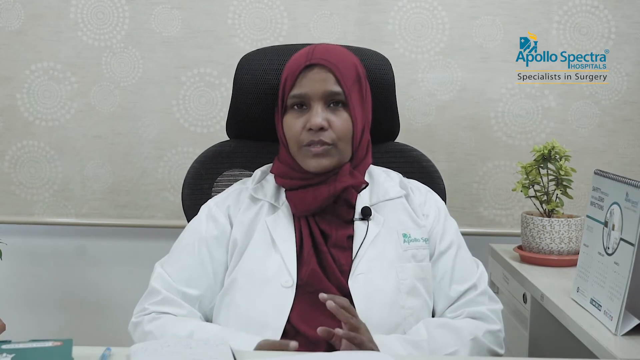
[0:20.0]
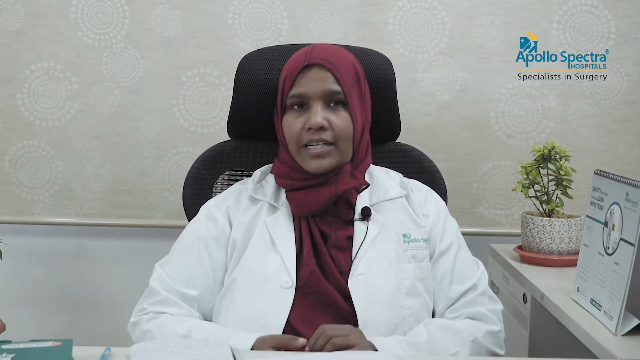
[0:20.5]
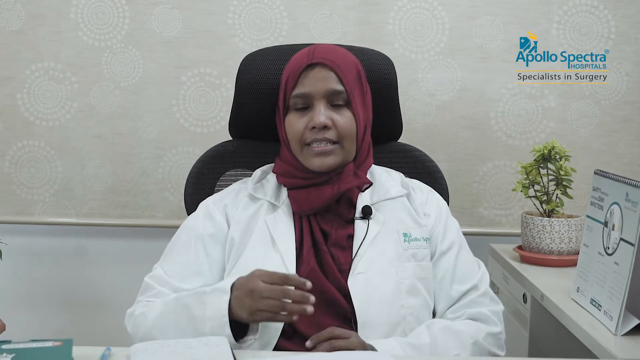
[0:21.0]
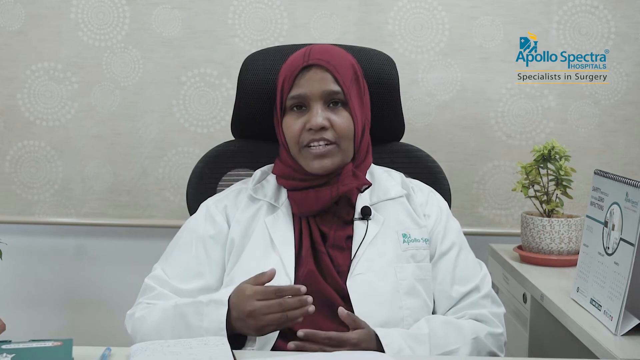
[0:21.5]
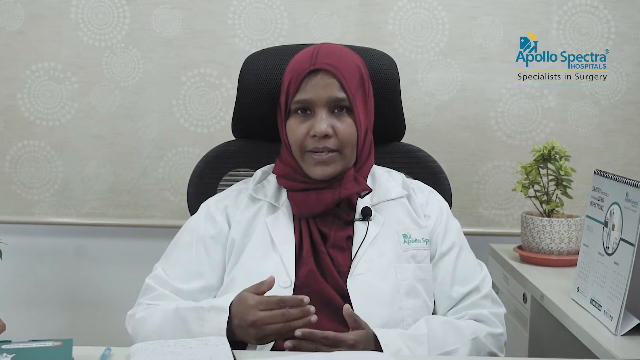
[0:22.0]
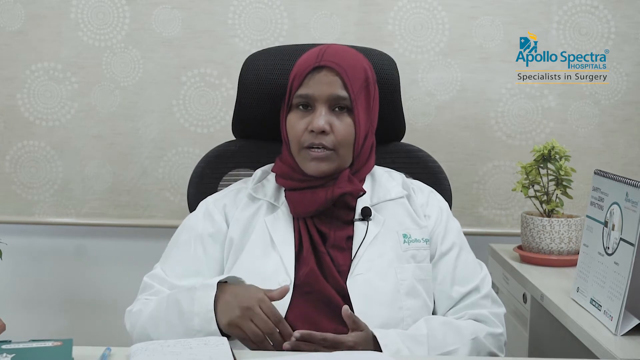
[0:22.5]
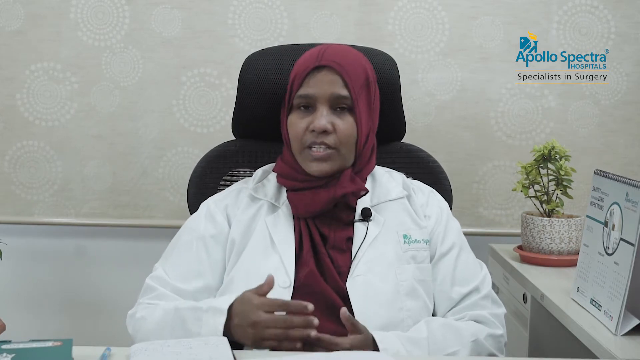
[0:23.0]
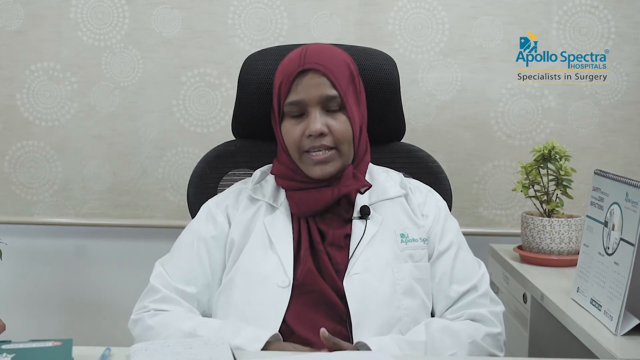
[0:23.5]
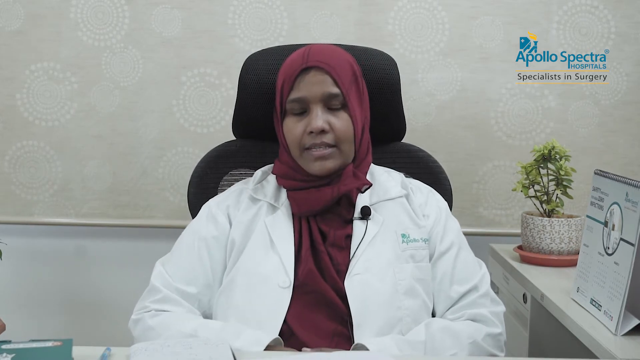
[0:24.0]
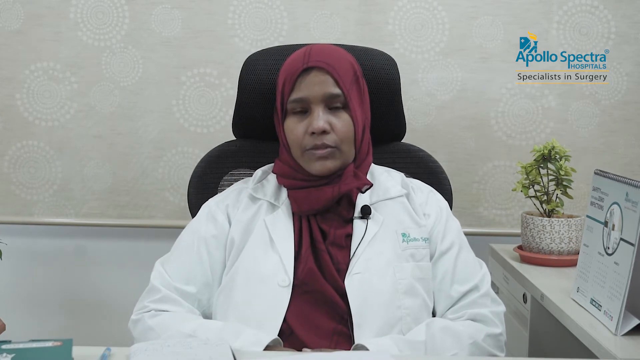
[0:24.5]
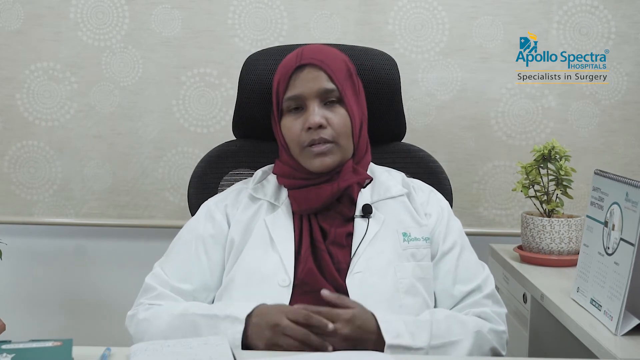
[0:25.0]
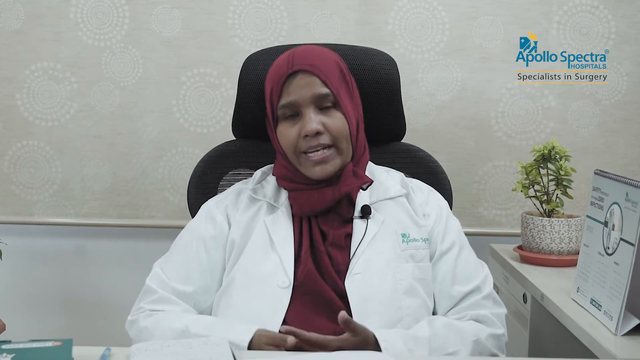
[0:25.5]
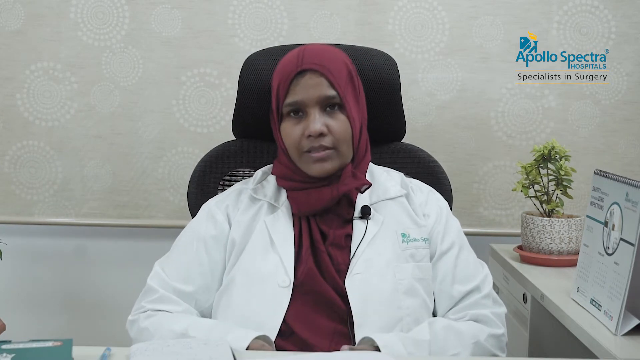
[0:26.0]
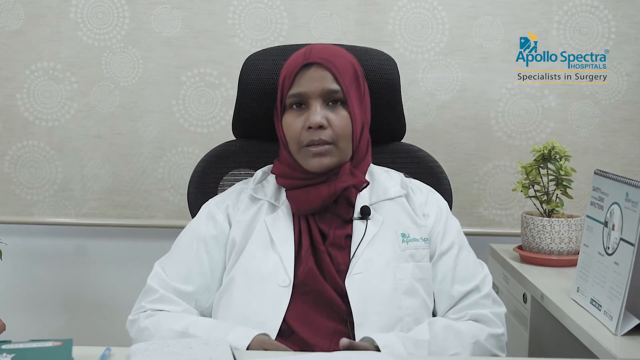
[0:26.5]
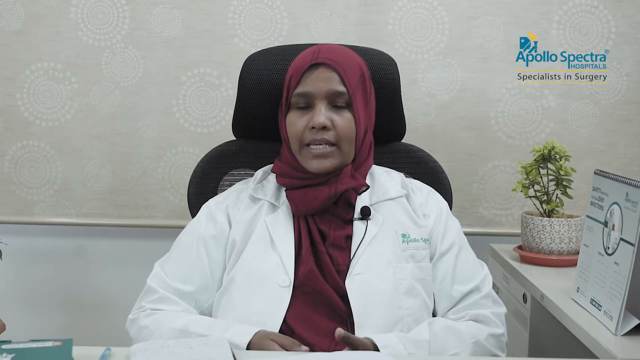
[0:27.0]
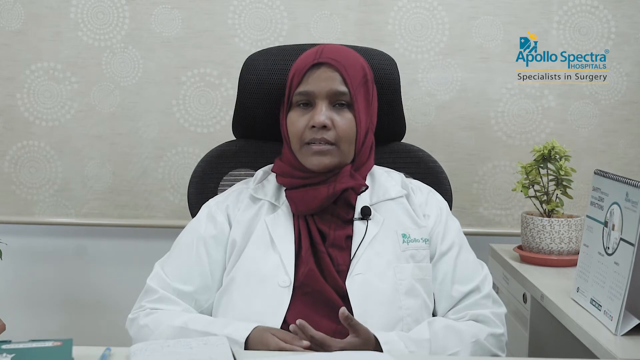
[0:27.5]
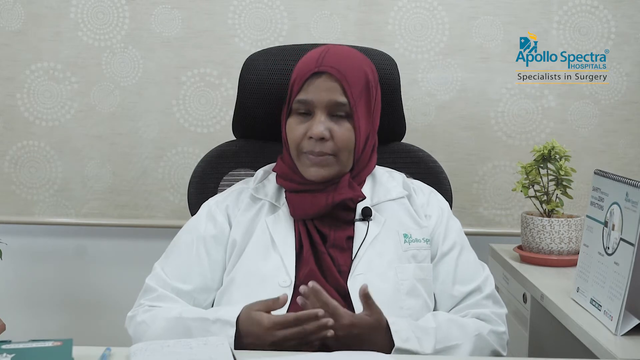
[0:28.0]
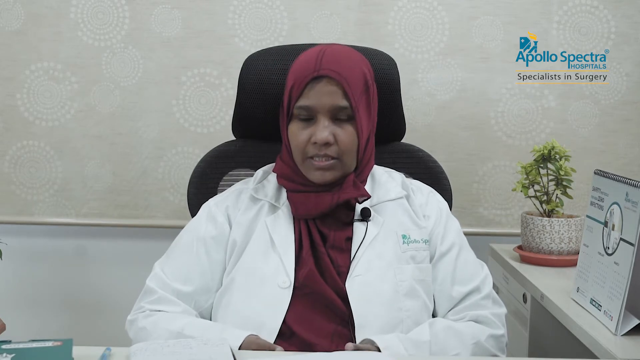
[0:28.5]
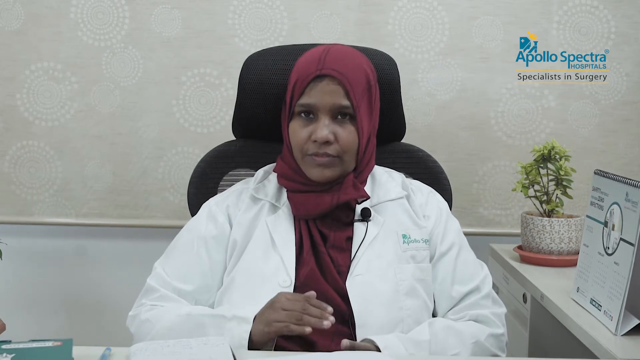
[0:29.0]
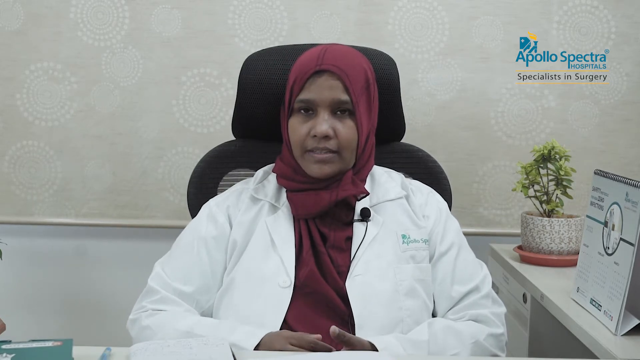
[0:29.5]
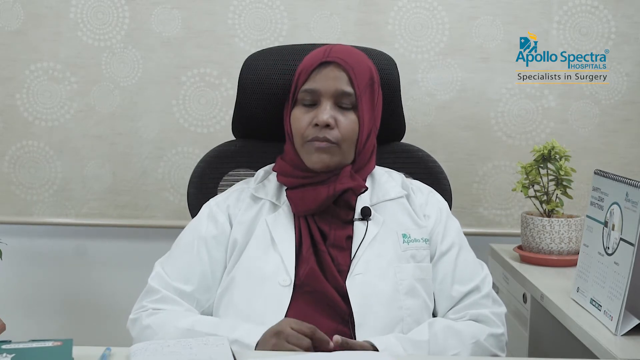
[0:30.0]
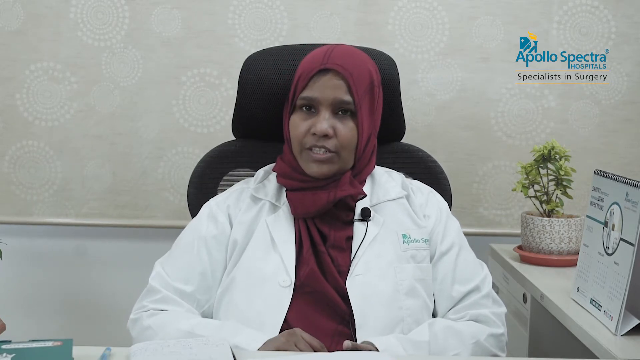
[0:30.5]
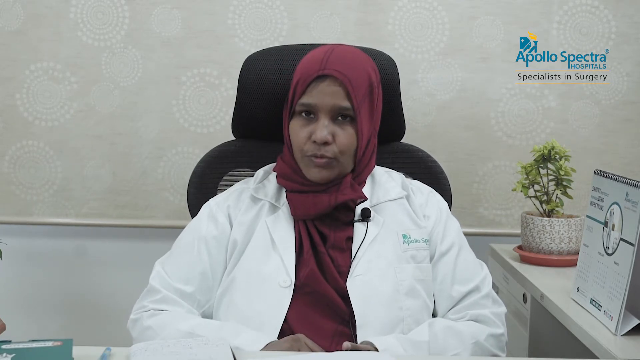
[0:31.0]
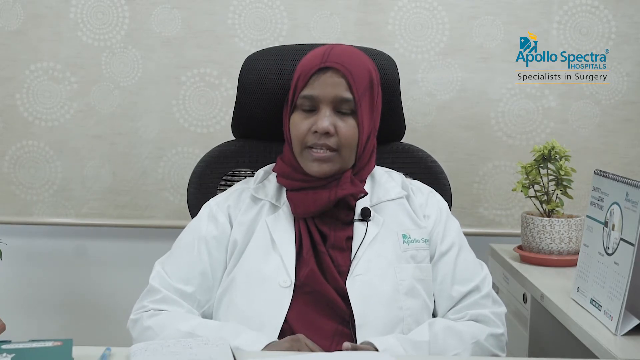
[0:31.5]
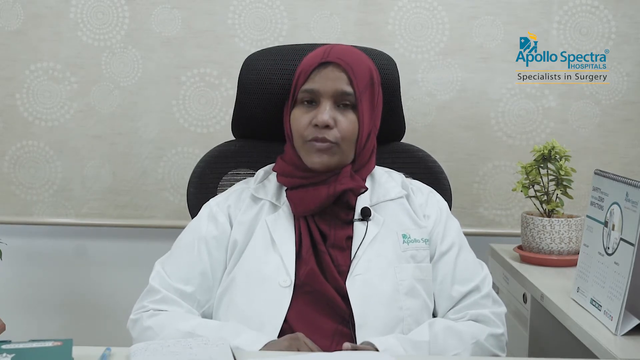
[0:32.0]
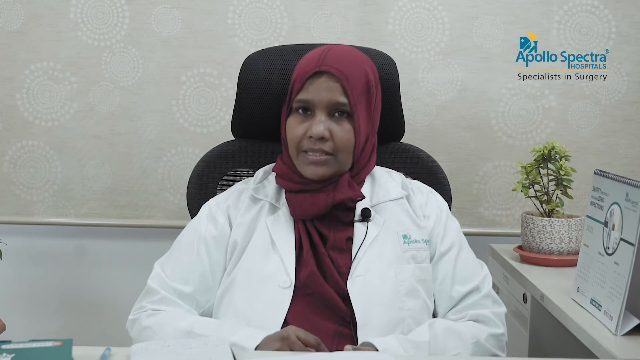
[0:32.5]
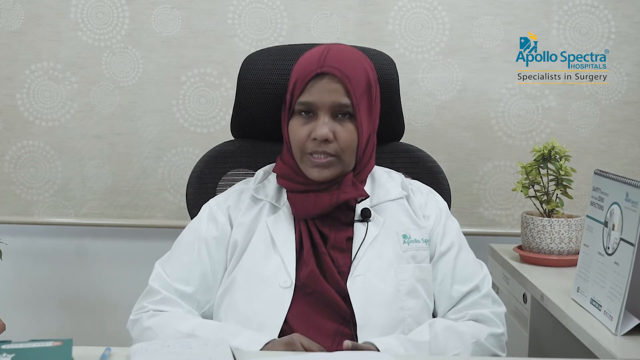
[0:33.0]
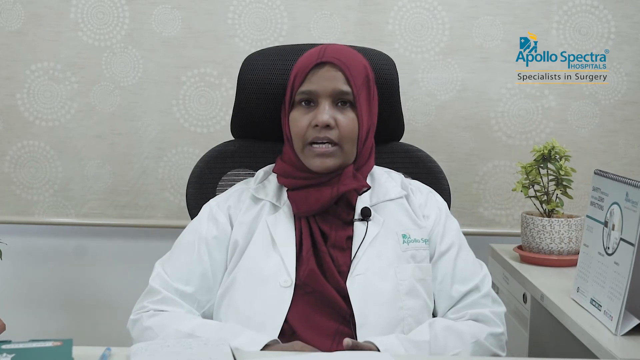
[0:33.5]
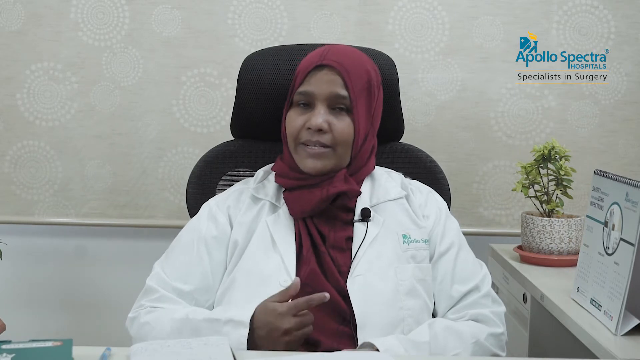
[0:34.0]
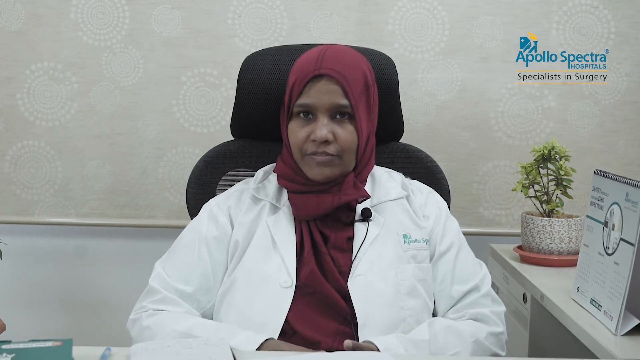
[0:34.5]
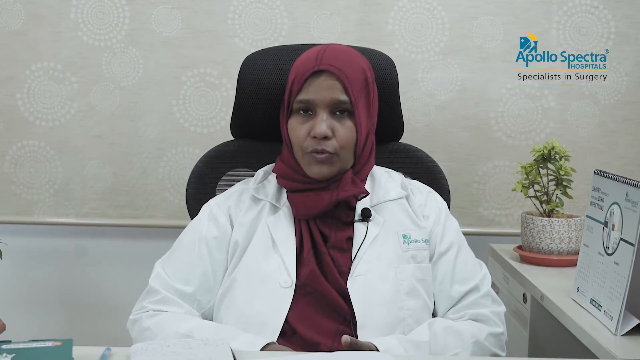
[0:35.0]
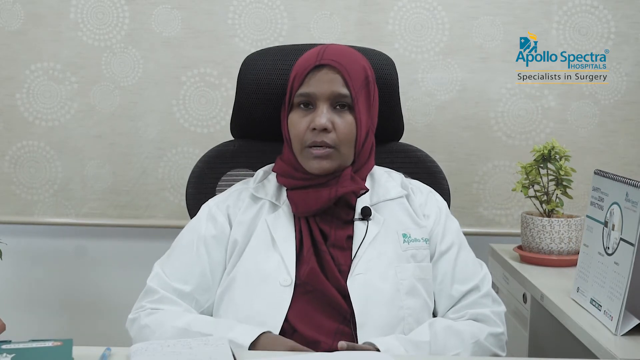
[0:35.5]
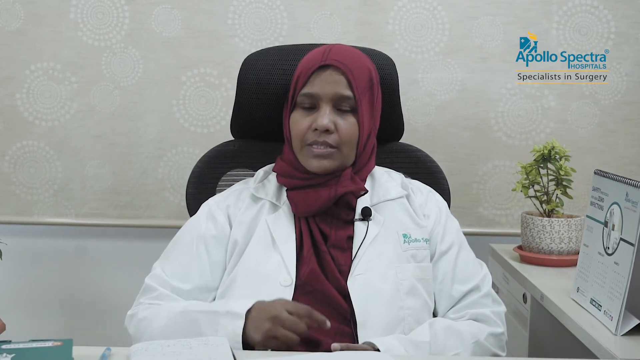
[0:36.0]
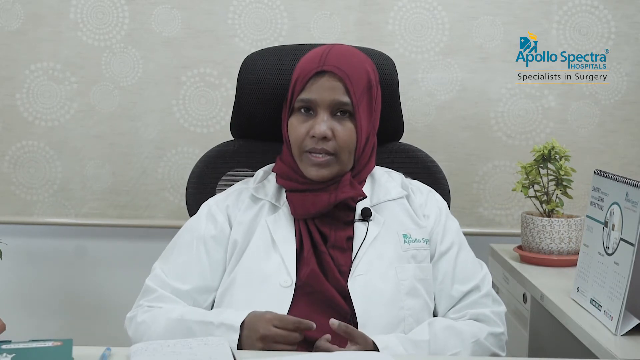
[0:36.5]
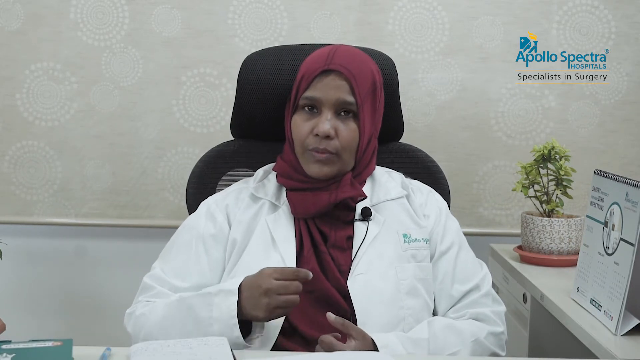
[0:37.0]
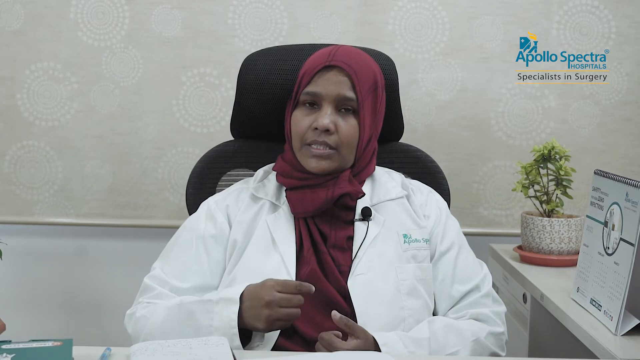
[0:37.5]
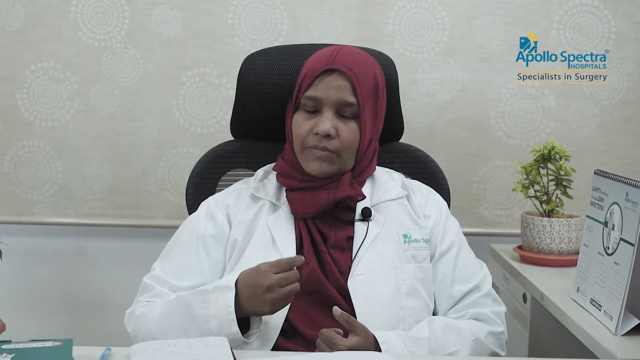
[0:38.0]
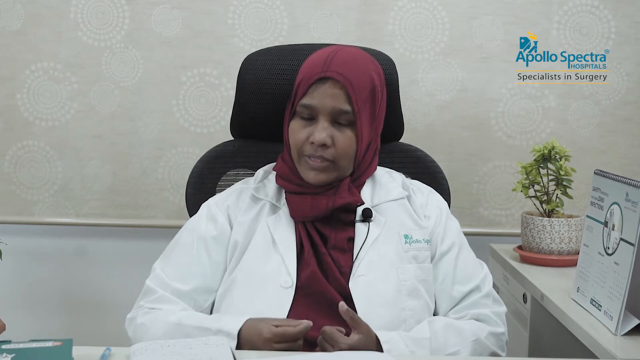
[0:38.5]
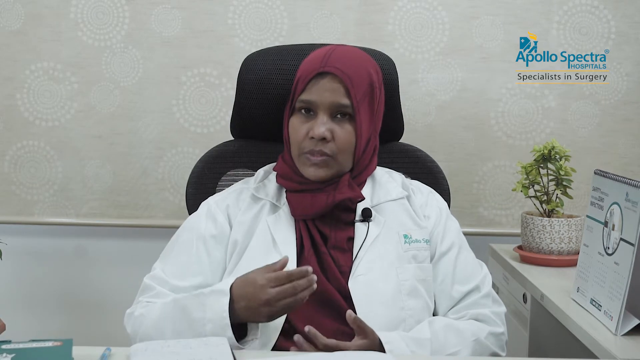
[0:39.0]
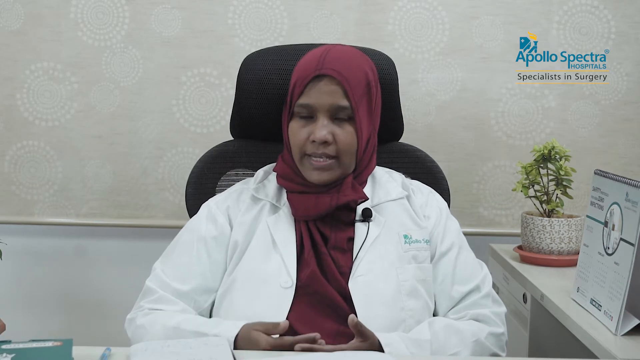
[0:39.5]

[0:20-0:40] A woman in a red headscarf and a white doctor's jacket is sitting in a black chair in an office, beside a plant and a white table; it appears to be some type of medical office. She is talking, with a black microphone attached to the lapel of her jacket, and uses her hands, very animated. A logo reading "Apollo Spectra Hospitals Specialist in Surgery" appears at the top right of the video. Behind her, tan wallpaper with white circles covers the top half of the wall, with some type of wood border; below the wood border is white paint. No phone number or other contact information is shown.